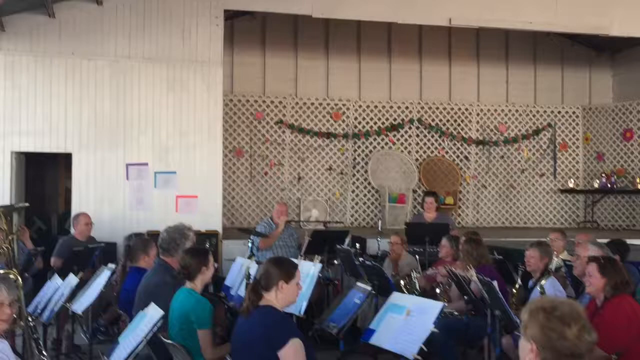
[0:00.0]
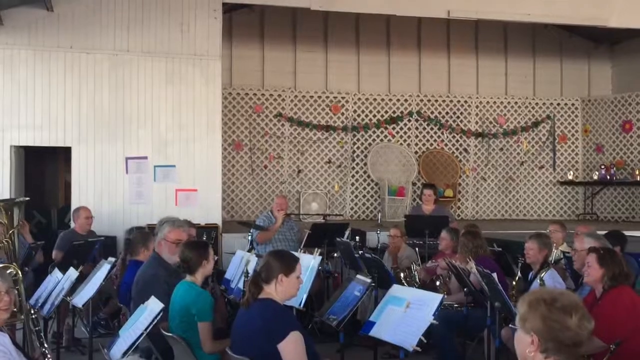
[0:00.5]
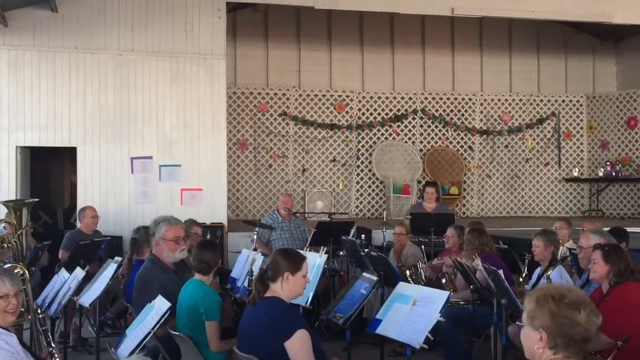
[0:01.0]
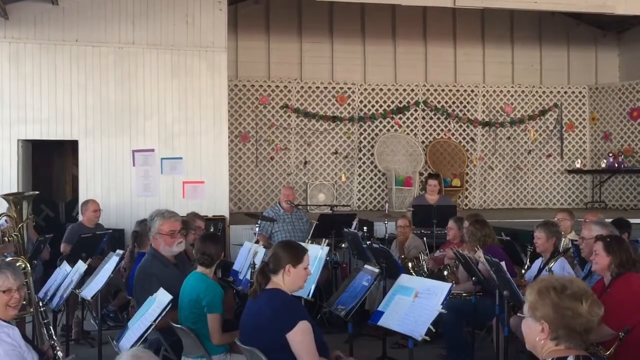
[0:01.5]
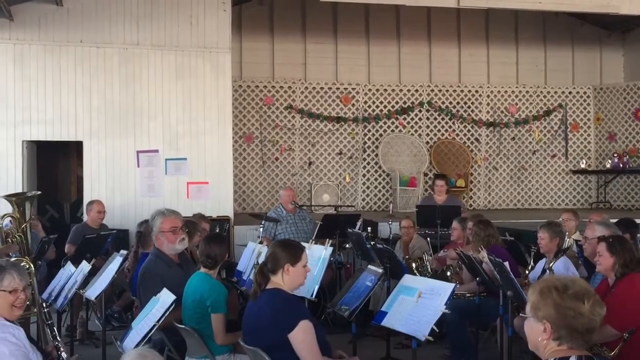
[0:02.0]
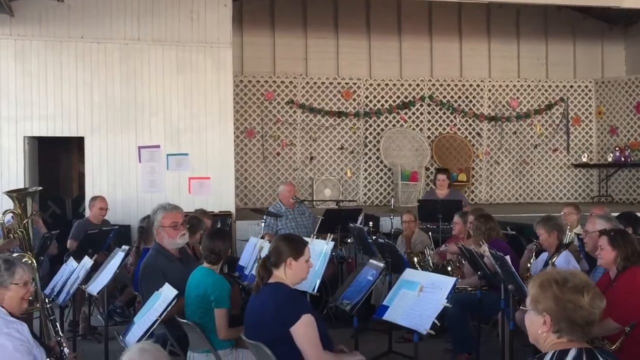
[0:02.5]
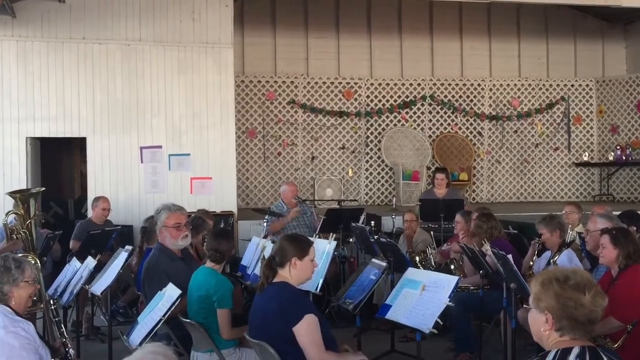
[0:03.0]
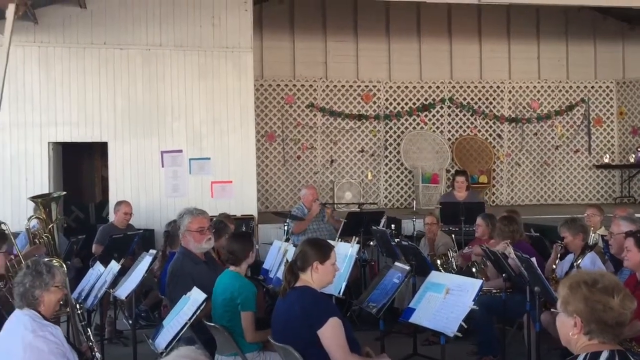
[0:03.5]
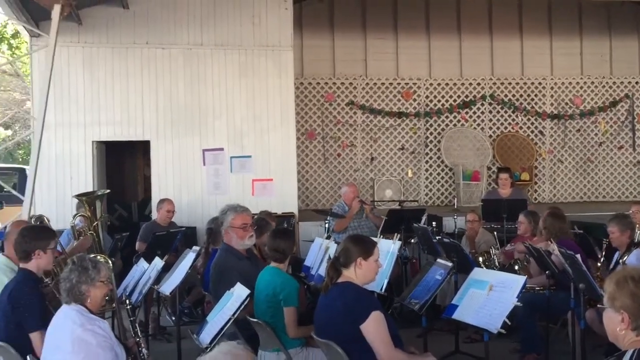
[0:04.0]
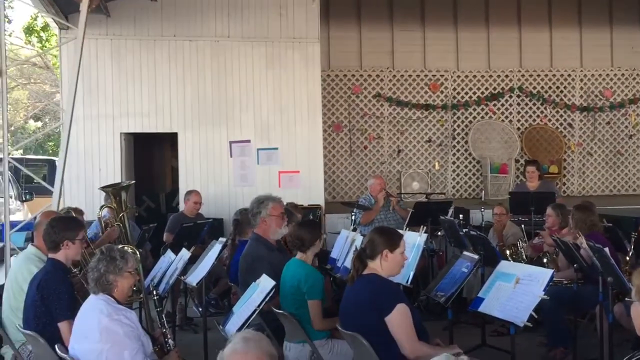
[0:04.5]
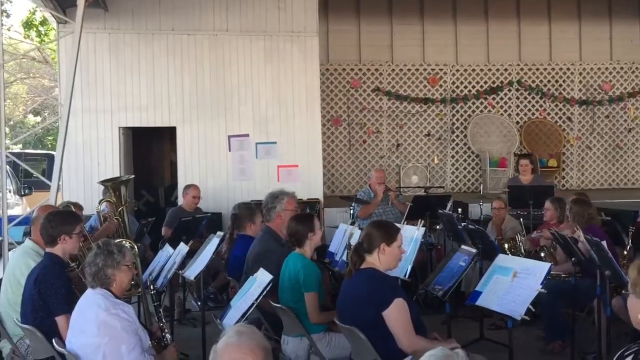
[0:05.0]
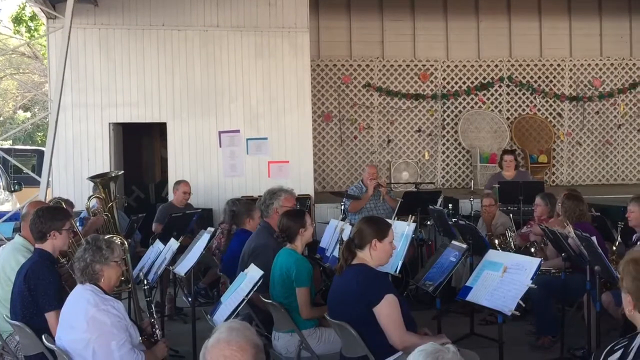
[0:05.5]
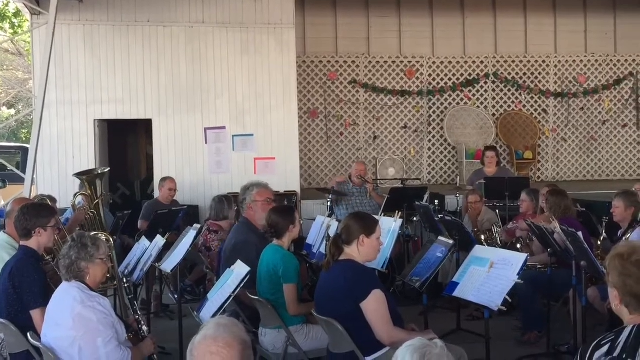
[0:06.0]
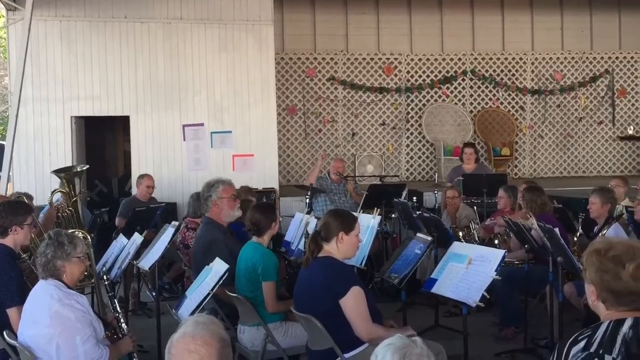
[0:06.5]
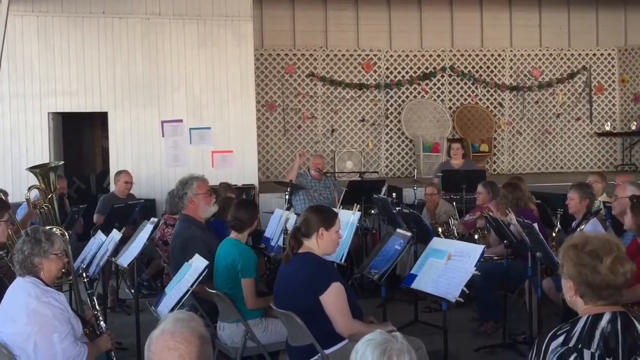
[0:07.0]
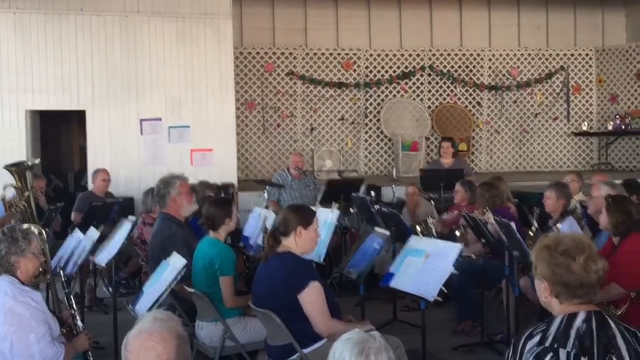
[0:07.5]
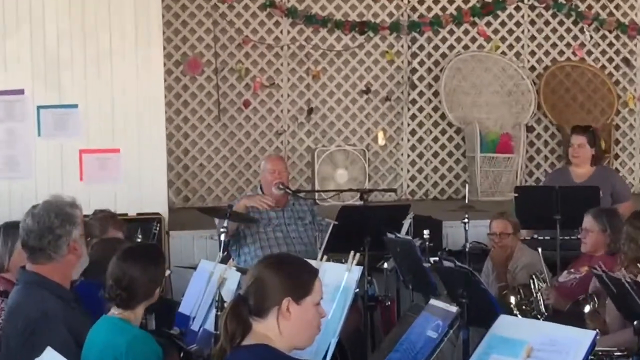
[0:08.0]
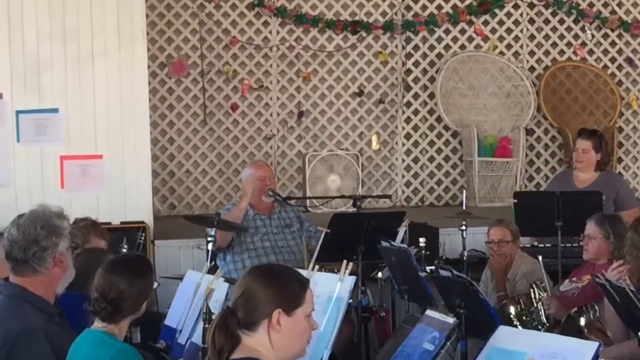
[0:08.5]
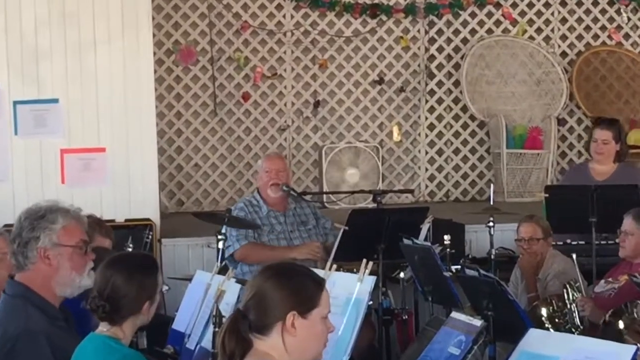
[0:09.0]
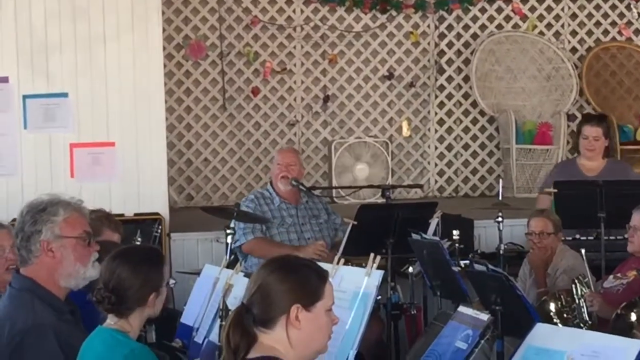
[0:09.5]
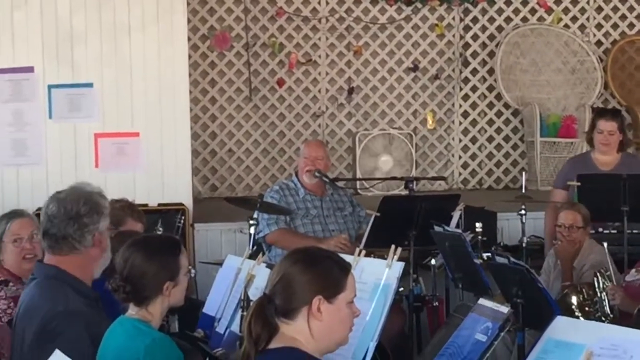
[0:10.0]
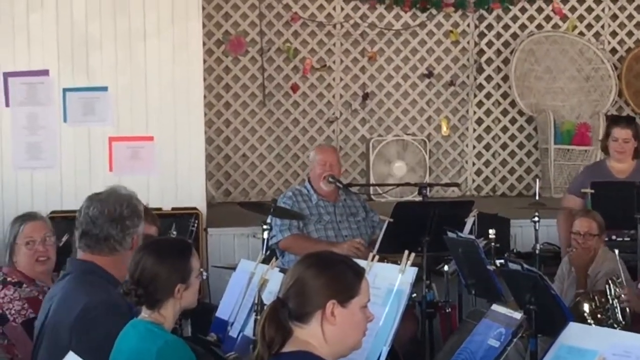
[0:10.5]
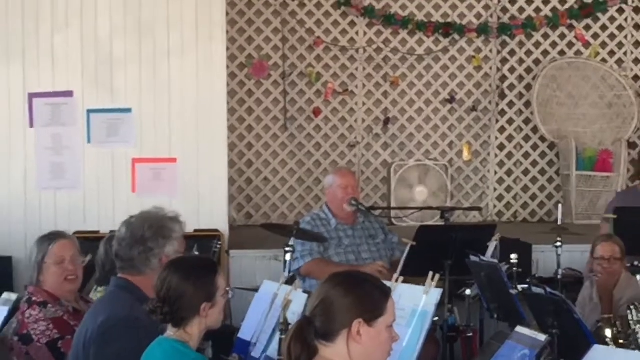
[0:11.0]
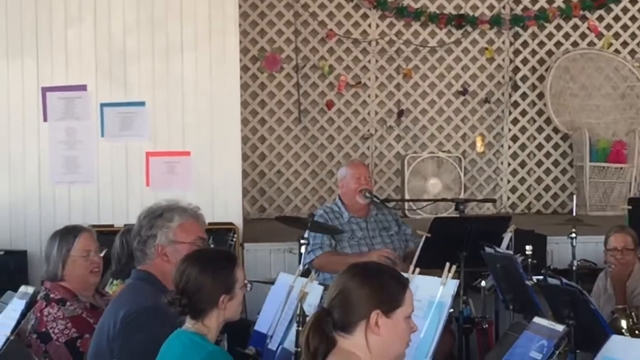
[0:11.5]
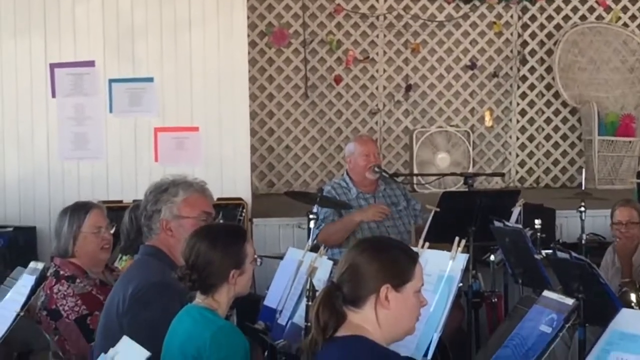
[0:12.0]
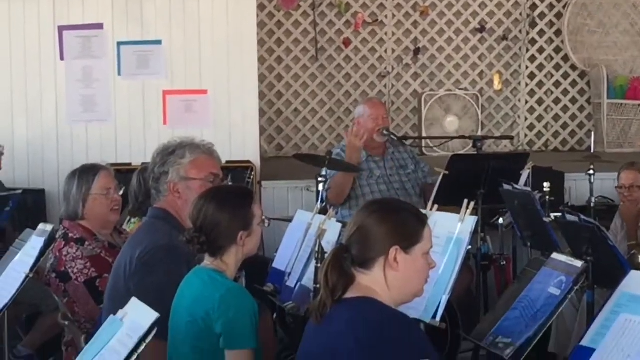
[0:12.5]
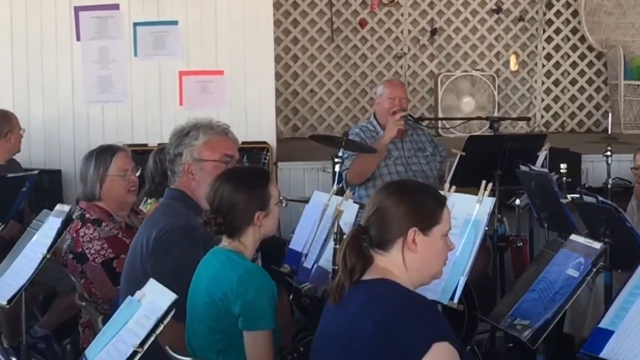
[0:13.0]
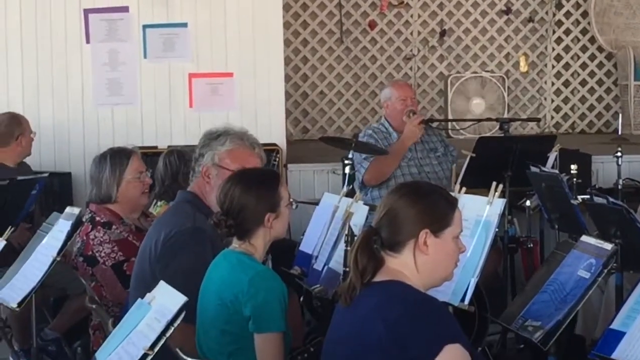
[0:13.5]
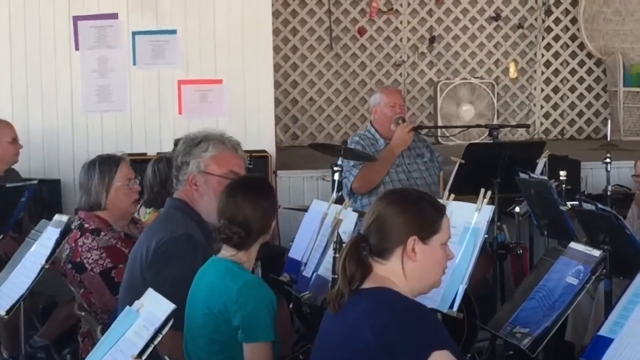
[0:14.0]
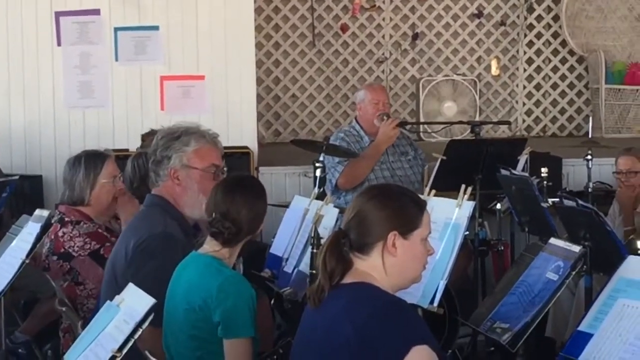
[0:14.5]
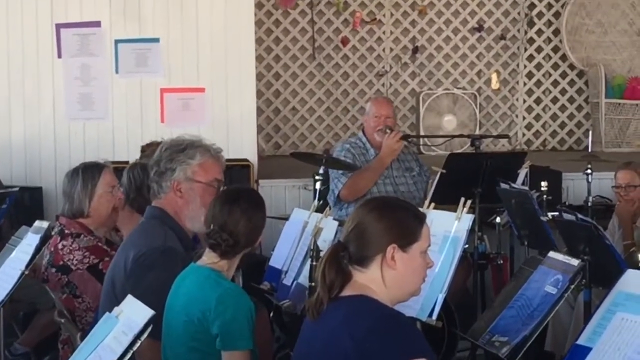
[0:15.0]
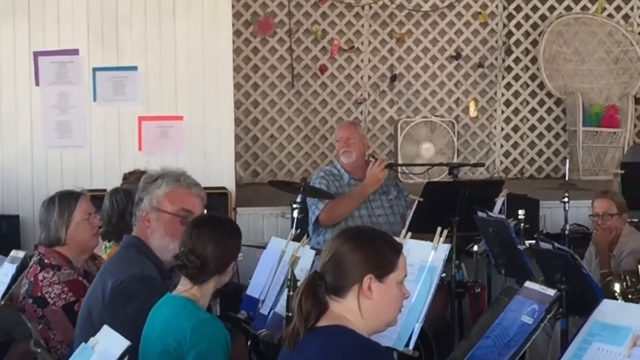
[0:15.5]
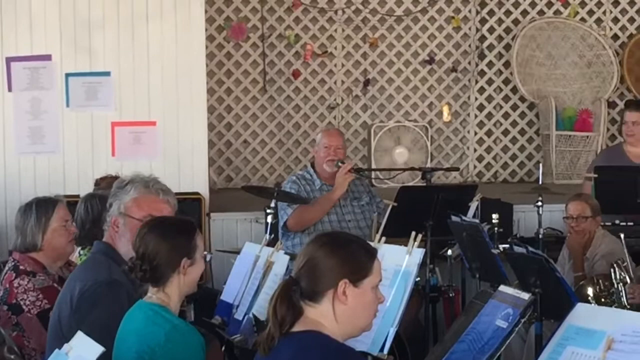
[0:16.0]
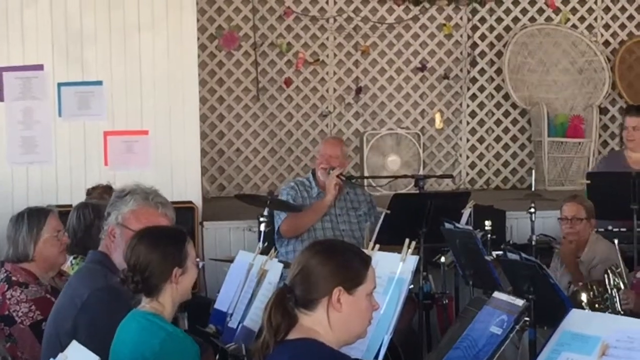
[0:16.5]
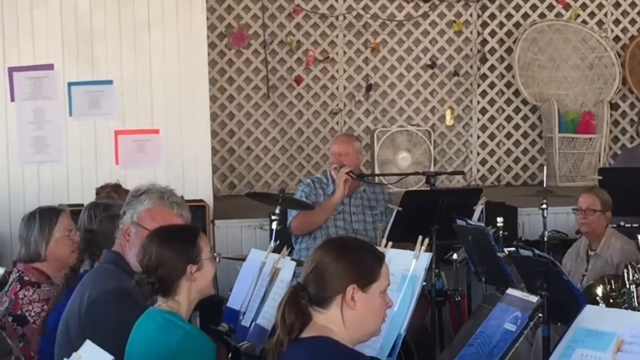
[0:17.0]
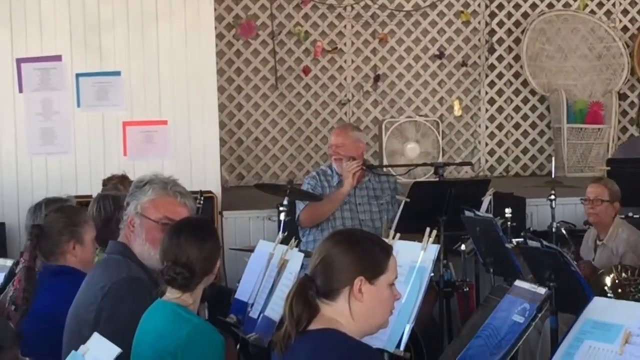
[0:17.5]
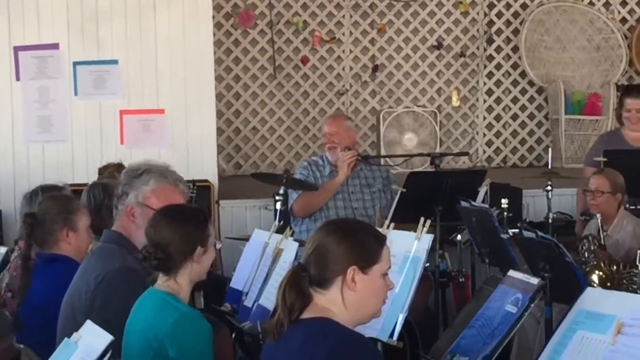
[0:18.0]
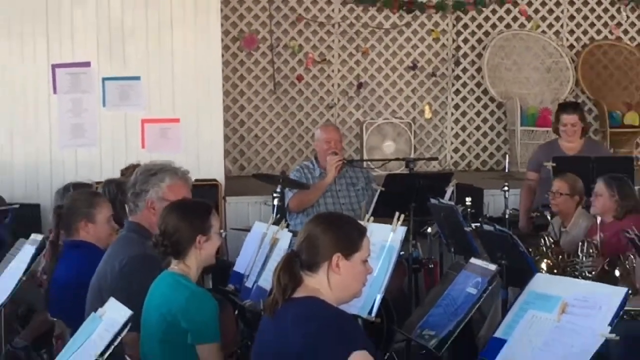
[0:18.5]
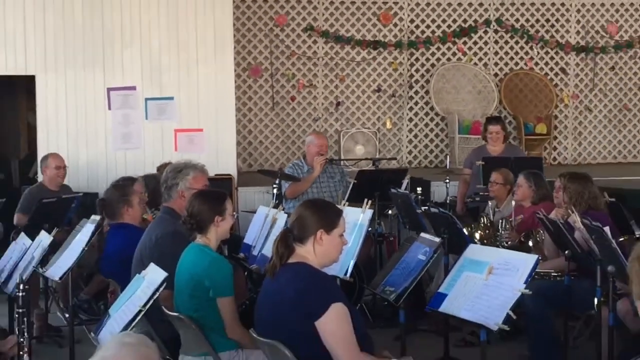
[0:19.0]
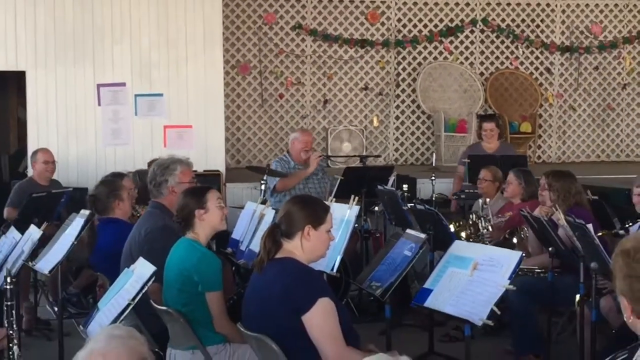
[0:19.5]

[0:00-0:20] A band is rehearsing. There are approximately 20 musicians holding instruments such as horns and woodwinds, and others have clarinets. A man in a checked shirt observes from far away at the bottom center of the screen. Another man observes from the far left and seems to be taking a photograph, and a woman conducts the orchestra, standing at a podium. Behind the woman and directly in front of the camera is a stage with a scrim lowered over it, so the stage itself is not visible. The scrim is covered with decorations that may be Christmas decorations. The band does not appear to be playing; instead someone appears to be talking to them: the man in the checked shirt. He gesticulates with his right hand, apparently giving instructions to the band. A microphone runs from his music stand to his mouth, and he might be singing rather than addressing the band.